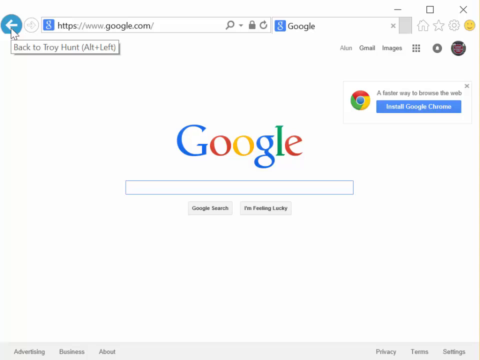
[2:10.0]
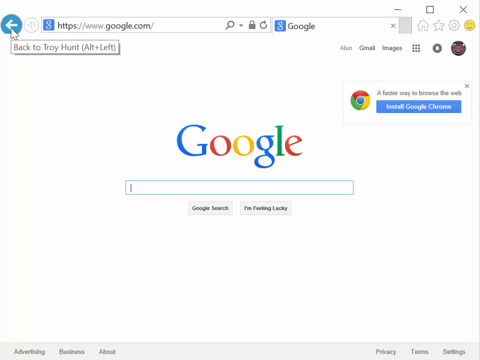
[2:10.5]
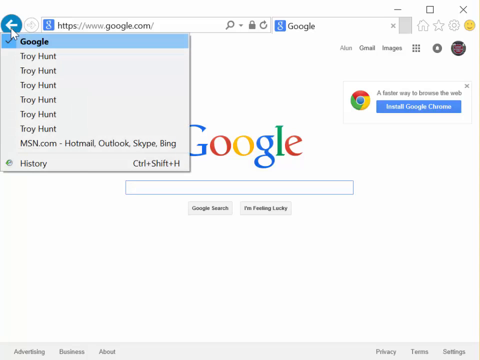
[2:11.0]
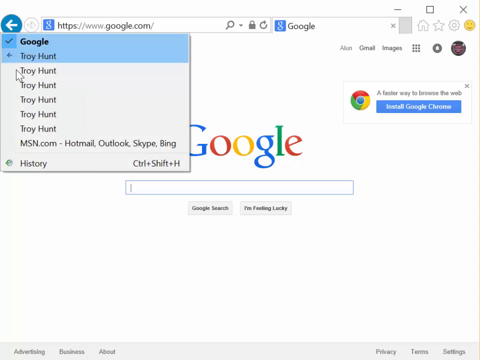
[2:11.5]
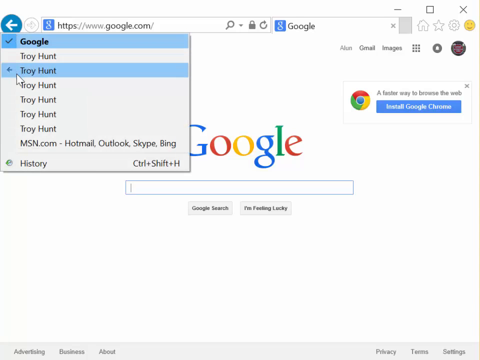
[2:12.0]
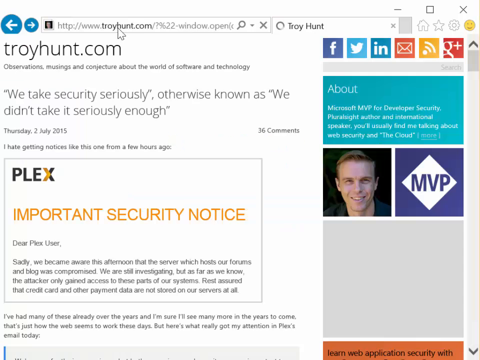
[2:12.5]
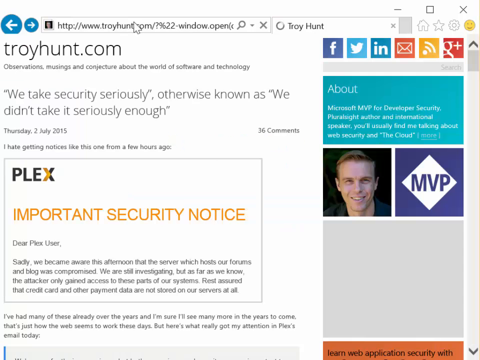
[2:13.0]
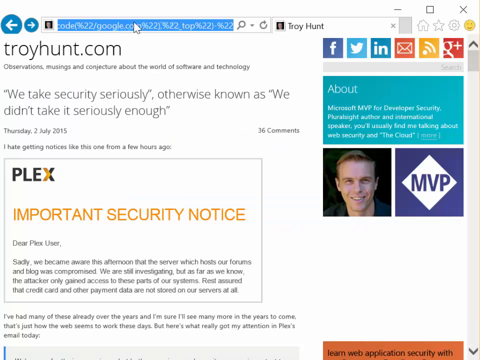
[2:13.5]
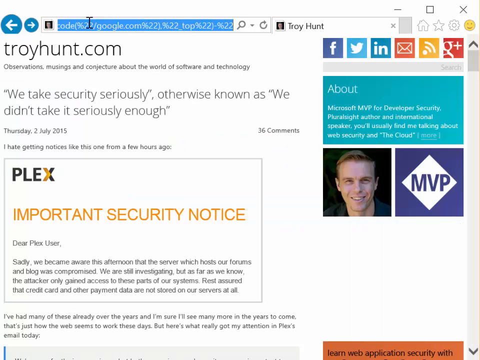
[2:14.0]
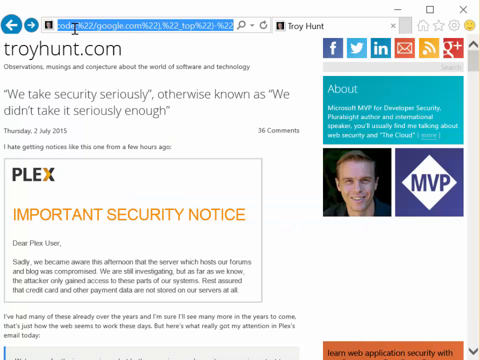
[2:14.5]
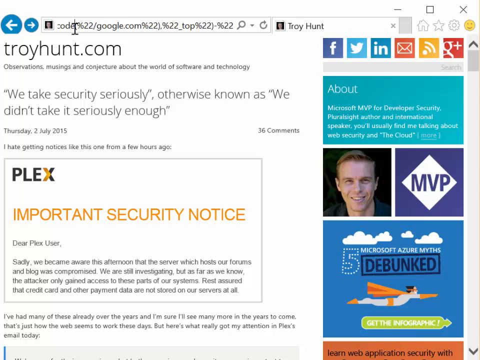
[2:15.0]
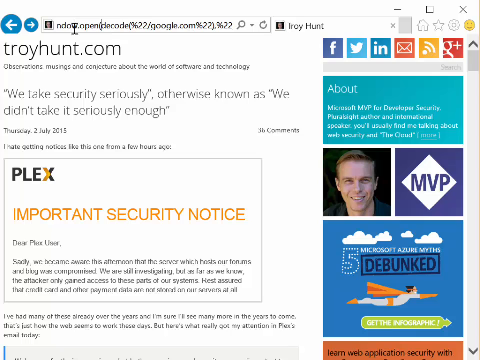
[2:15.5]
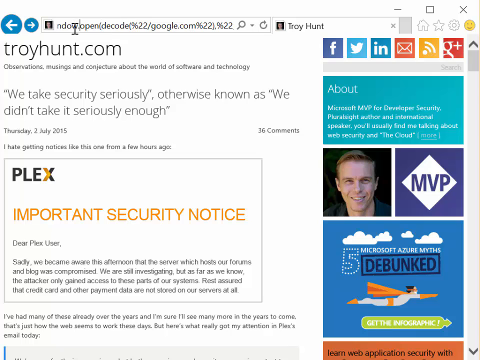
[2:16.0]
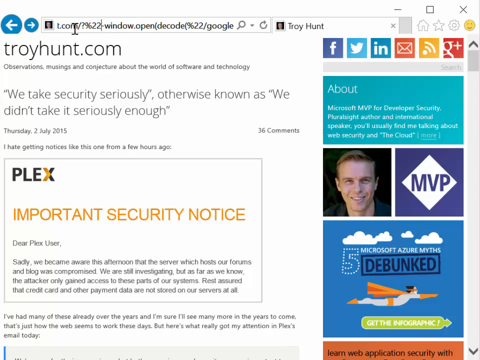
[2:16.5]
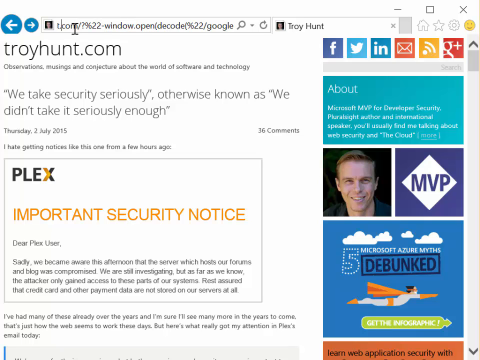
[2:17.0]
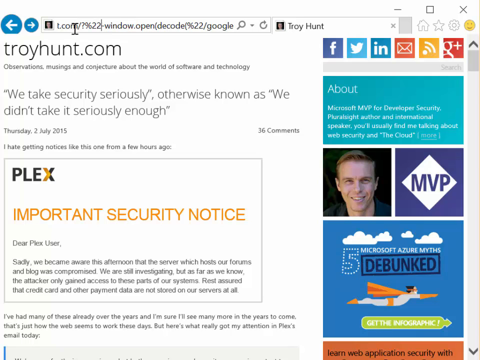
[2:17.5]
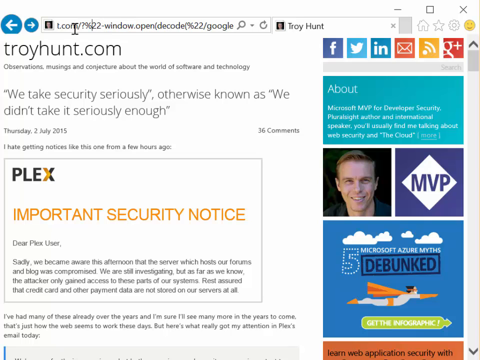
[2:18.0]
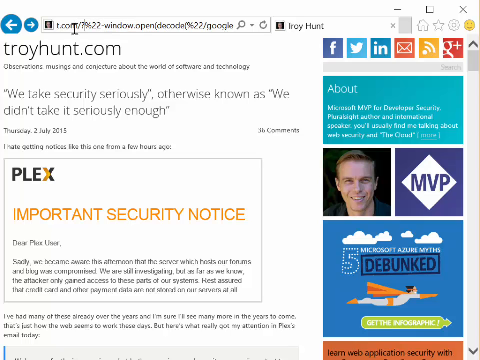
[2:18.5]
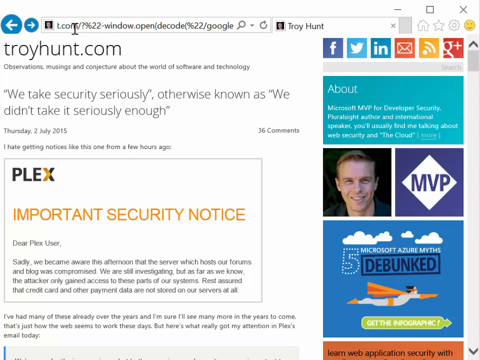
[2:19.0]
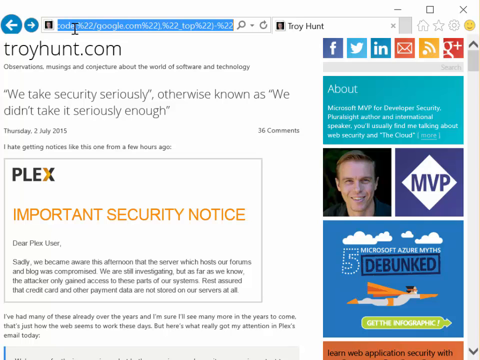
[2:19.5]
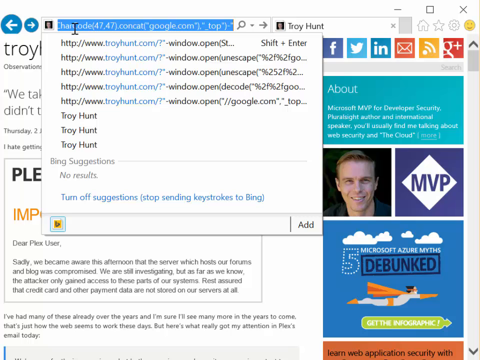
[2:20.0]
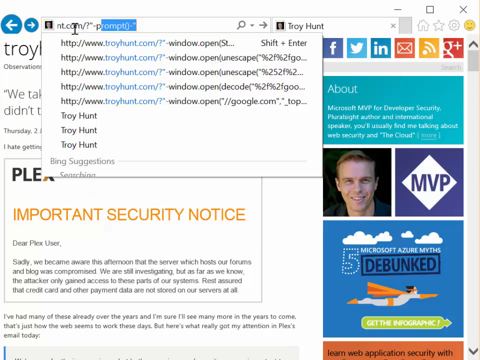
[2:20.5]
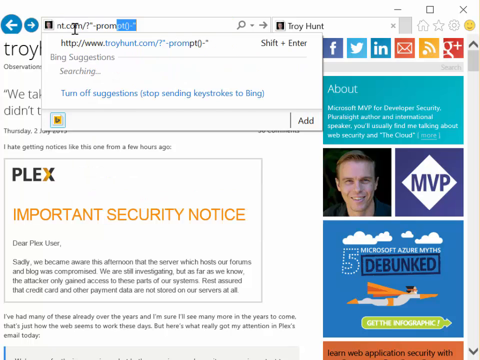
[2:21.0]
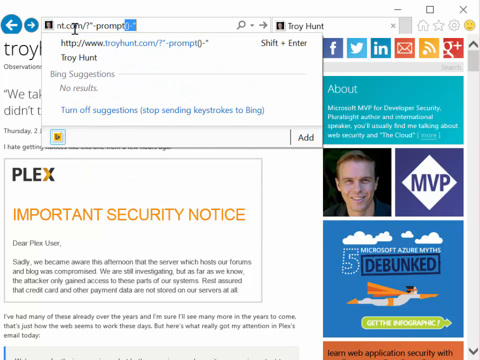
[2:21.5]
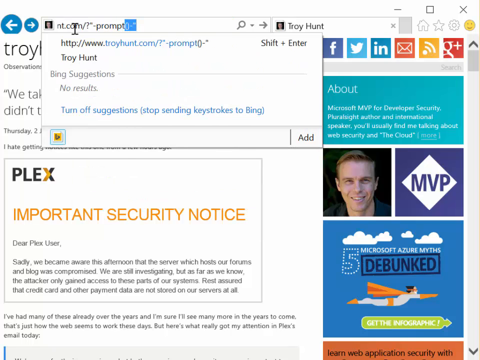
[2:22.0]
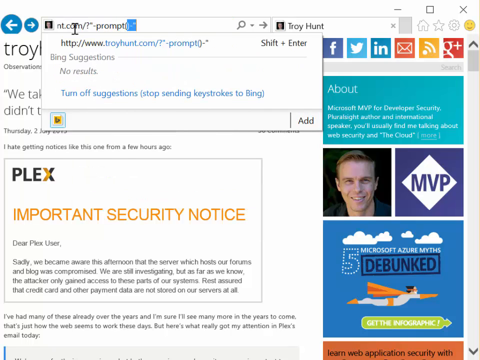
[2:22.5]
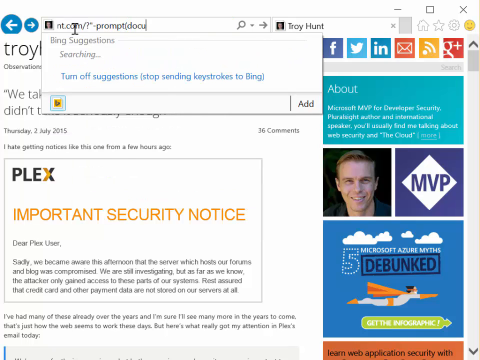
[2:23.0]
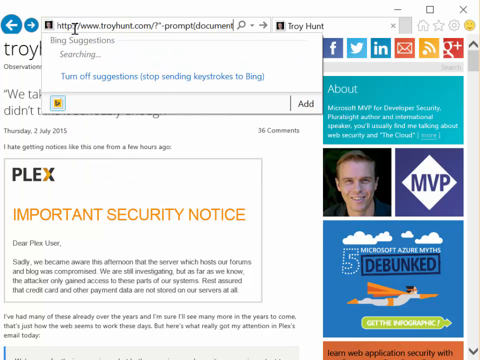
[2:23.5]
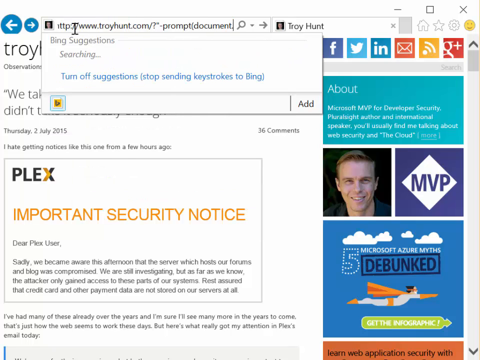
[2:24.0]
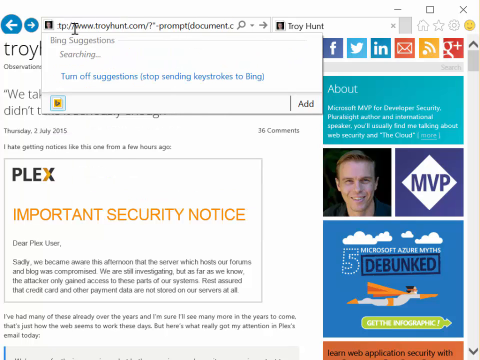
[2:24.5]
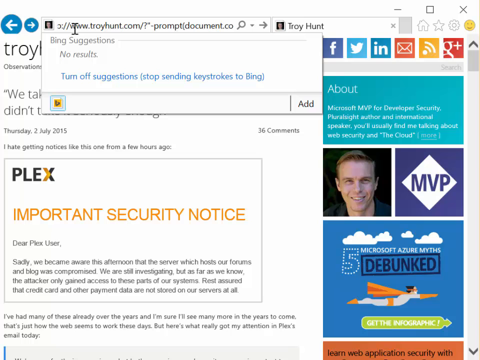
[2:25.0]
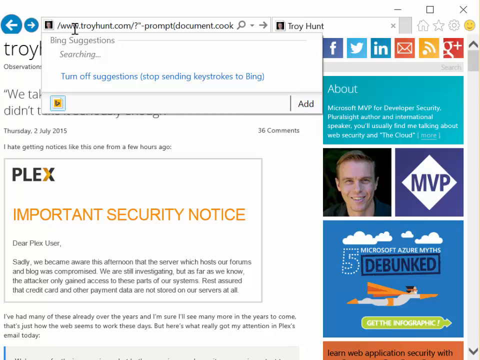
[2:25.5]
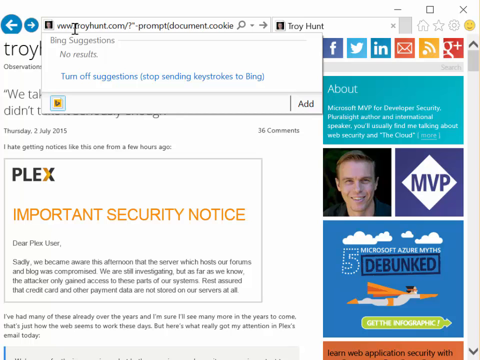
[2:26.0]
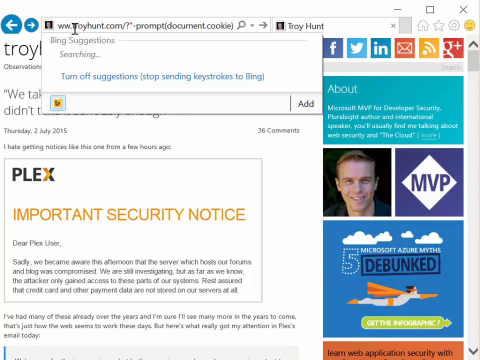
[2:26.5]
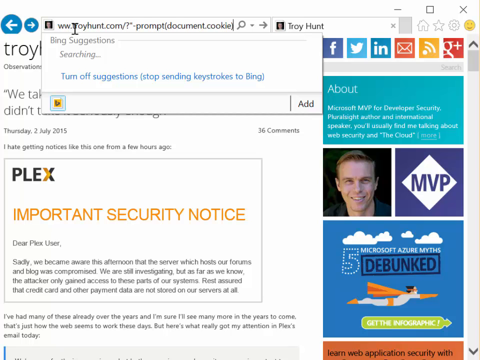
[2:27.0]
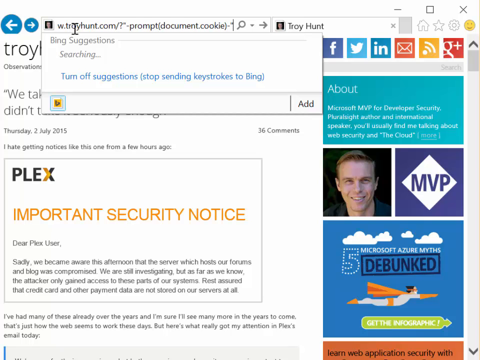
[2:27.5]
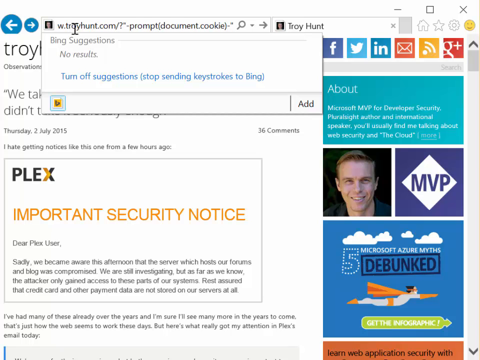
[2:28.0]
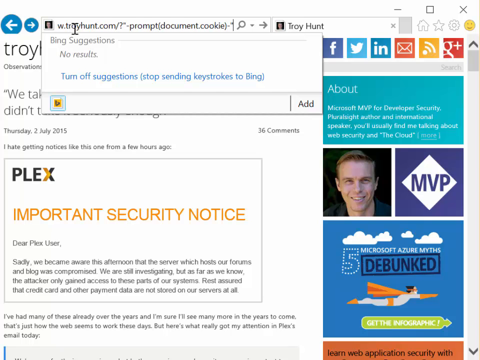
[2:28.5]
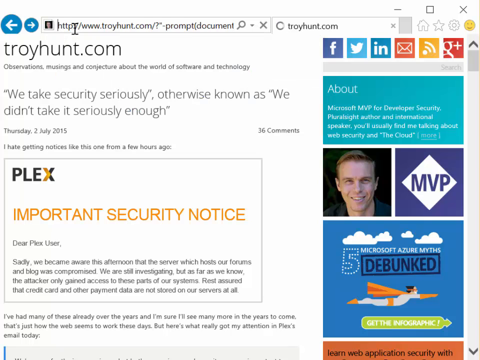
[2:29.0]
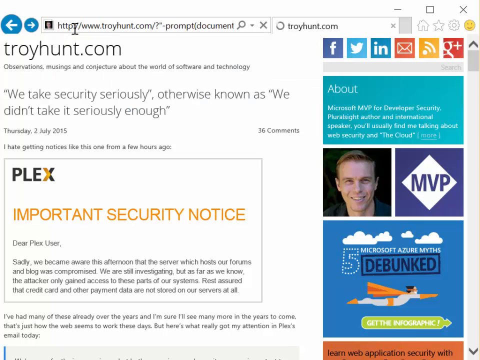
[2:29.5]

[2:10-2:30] The user is on the standard Google.com search page, showing the multicolored Google logo with a search bar underneath it. It looks like they use the back button to return to troyhunt.com, where they began. They then appear to highlight the entire address and type more lines that look like coding instructions directly into the address bar, seemingly the same way they reached Google before. The new text appears to include something about a prompt.